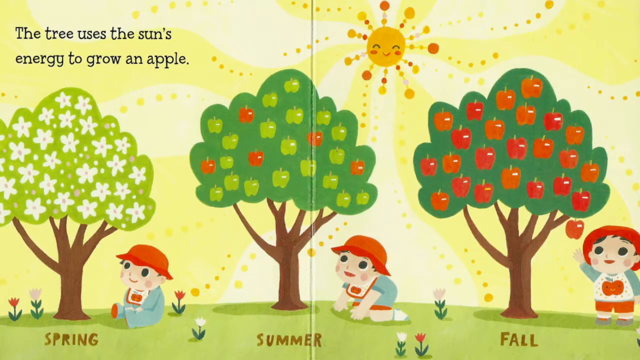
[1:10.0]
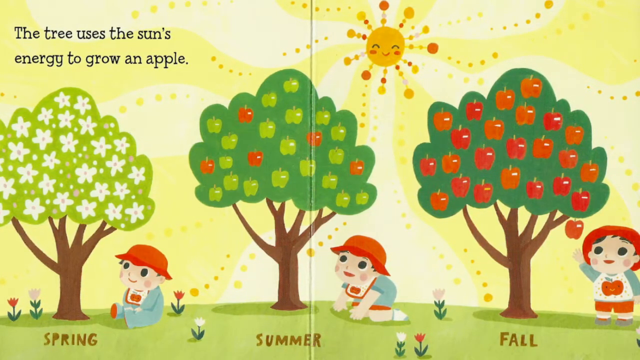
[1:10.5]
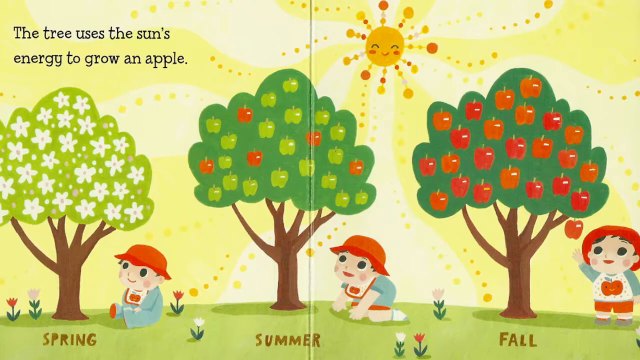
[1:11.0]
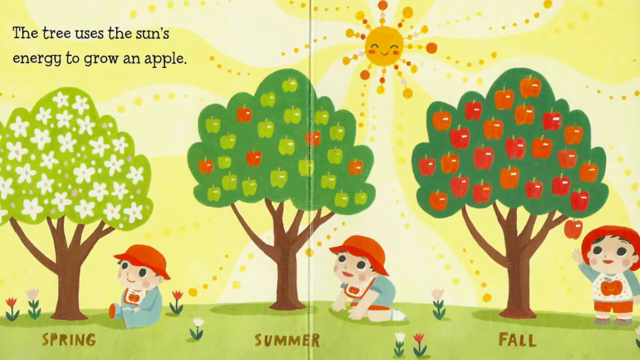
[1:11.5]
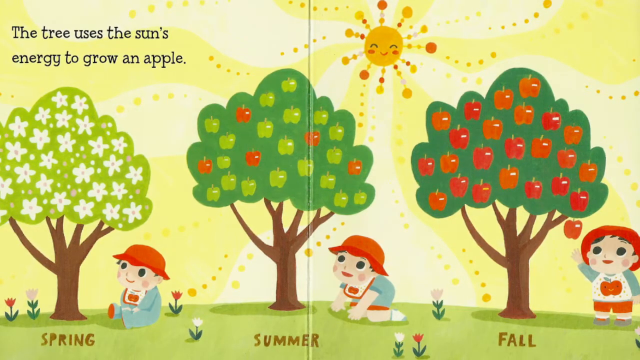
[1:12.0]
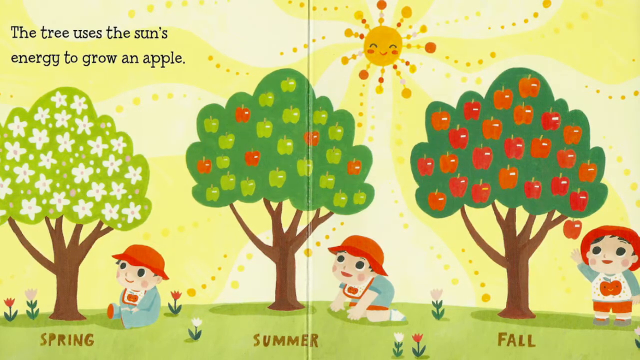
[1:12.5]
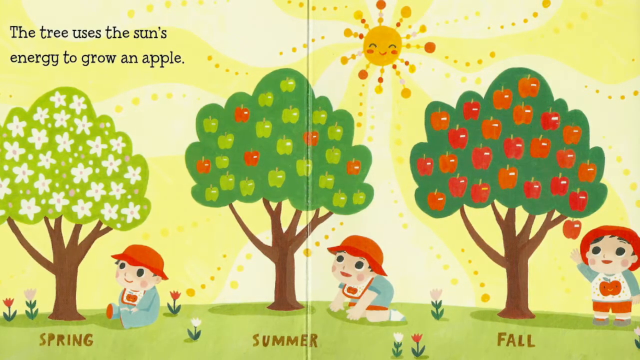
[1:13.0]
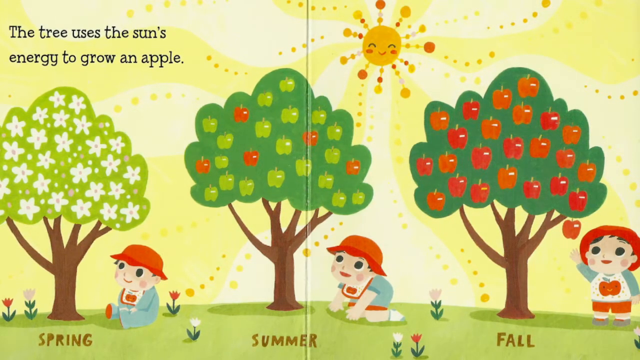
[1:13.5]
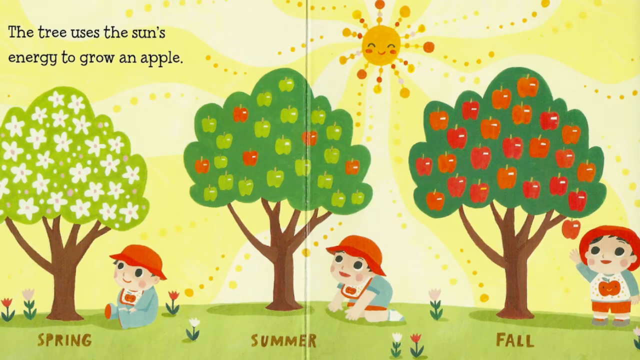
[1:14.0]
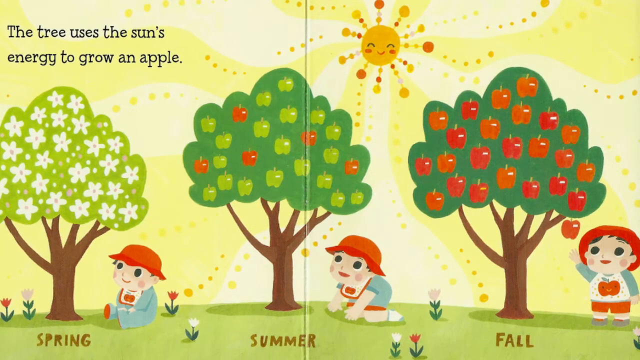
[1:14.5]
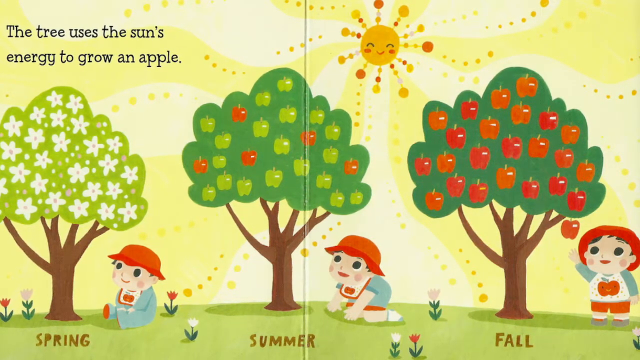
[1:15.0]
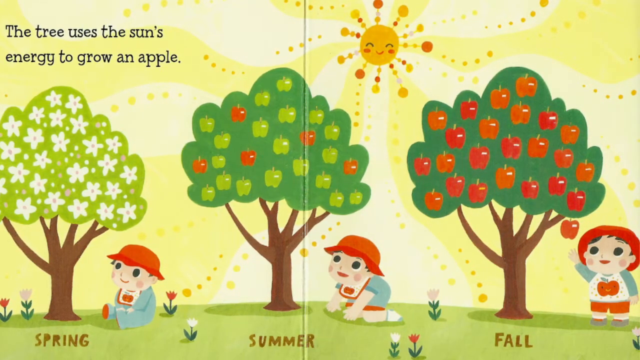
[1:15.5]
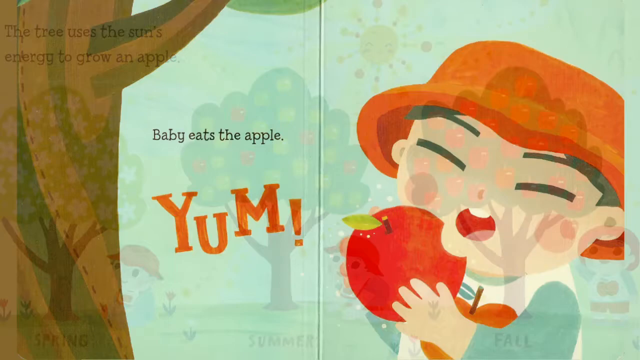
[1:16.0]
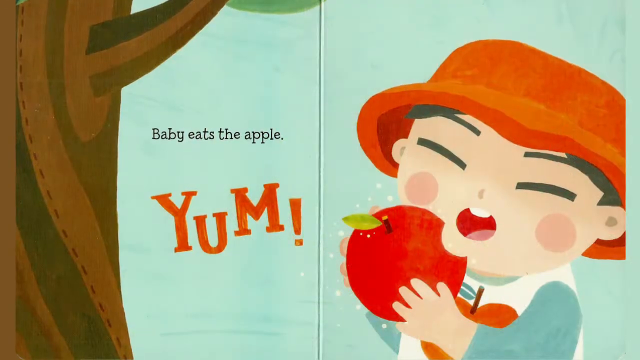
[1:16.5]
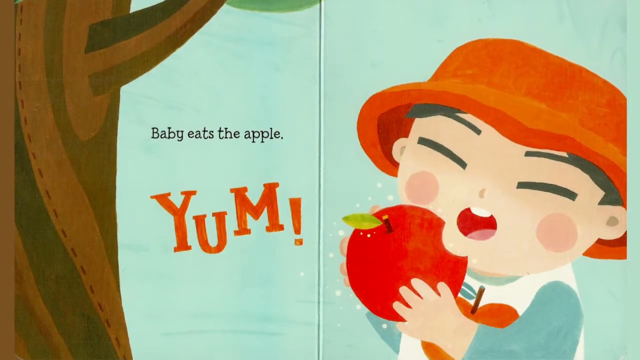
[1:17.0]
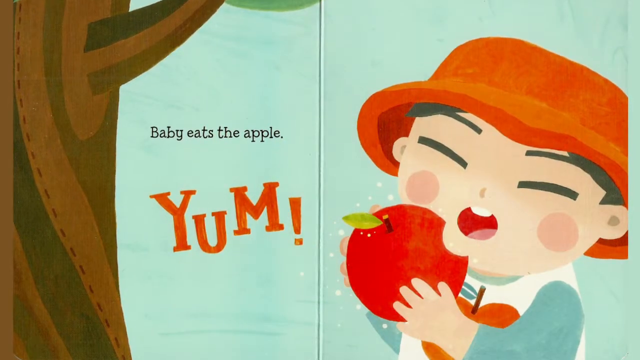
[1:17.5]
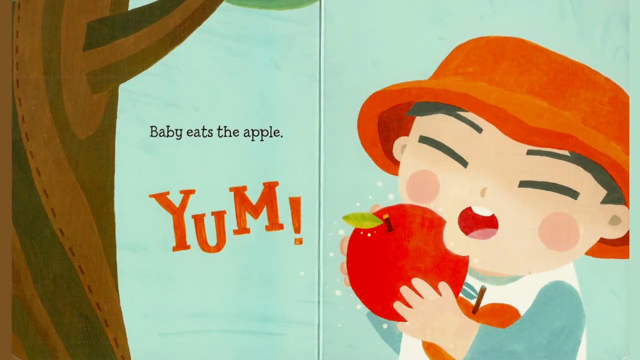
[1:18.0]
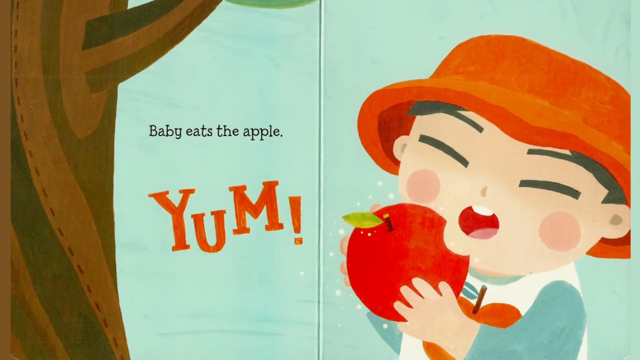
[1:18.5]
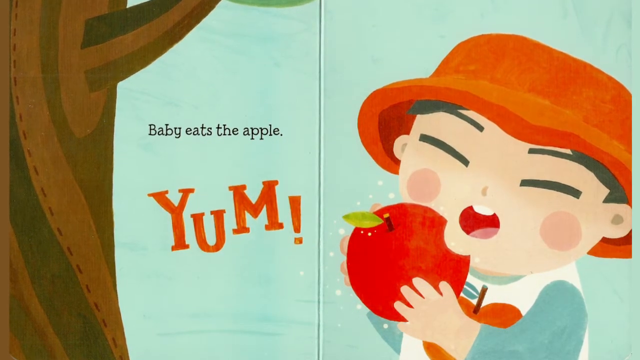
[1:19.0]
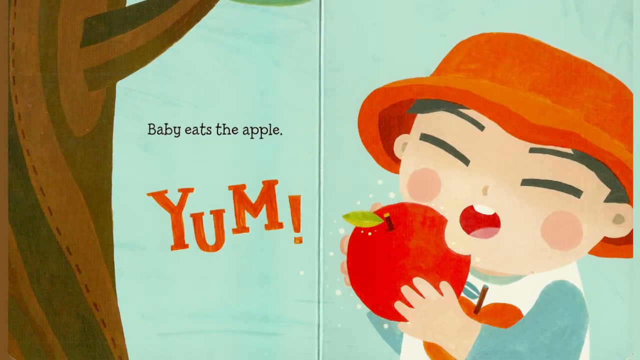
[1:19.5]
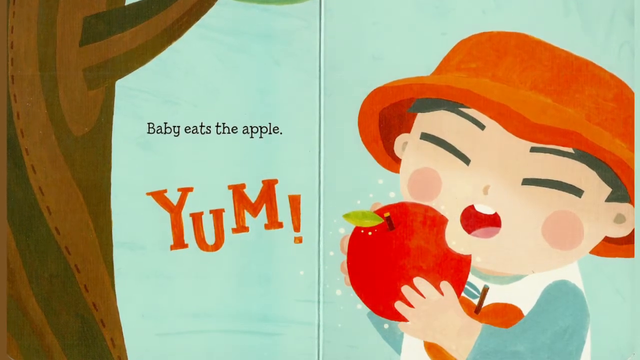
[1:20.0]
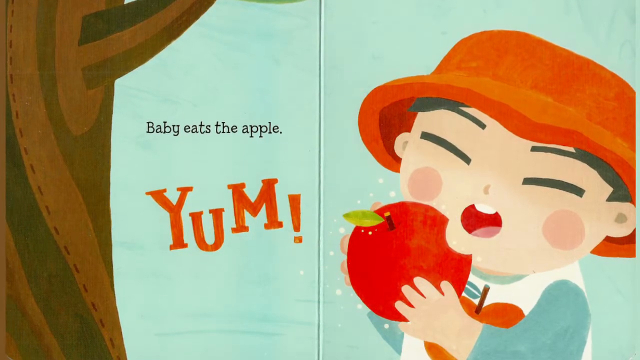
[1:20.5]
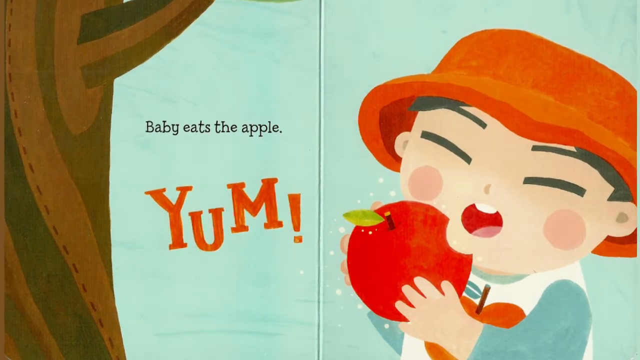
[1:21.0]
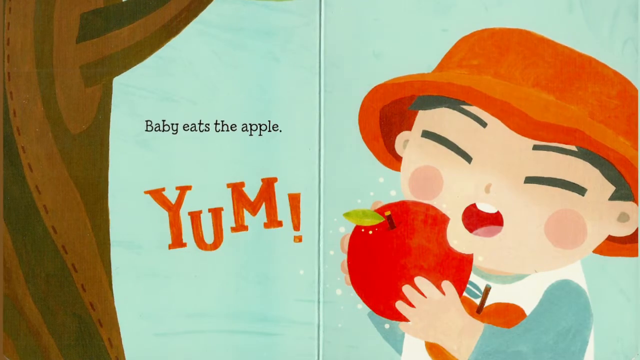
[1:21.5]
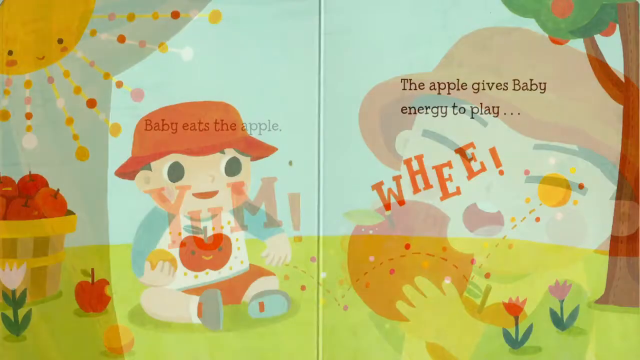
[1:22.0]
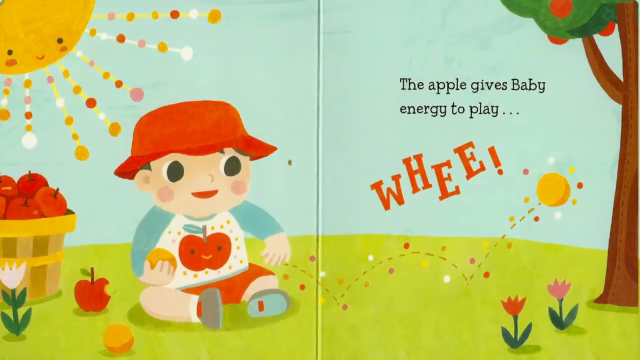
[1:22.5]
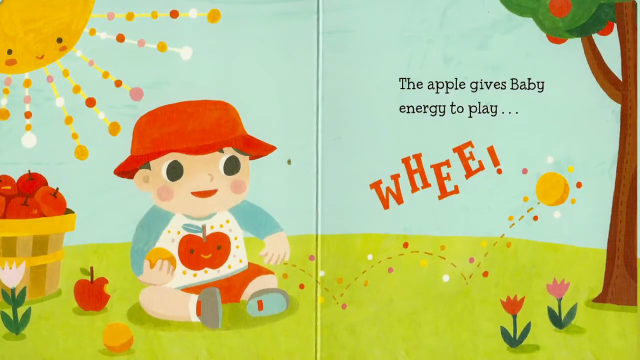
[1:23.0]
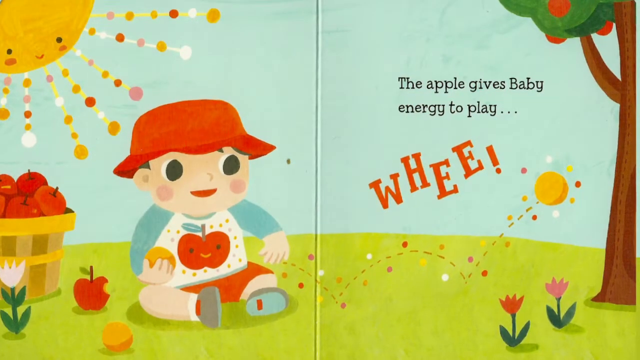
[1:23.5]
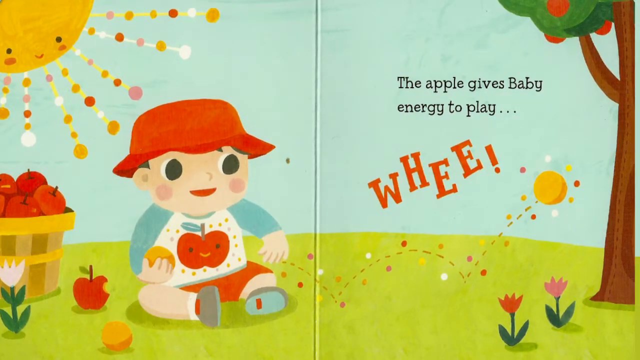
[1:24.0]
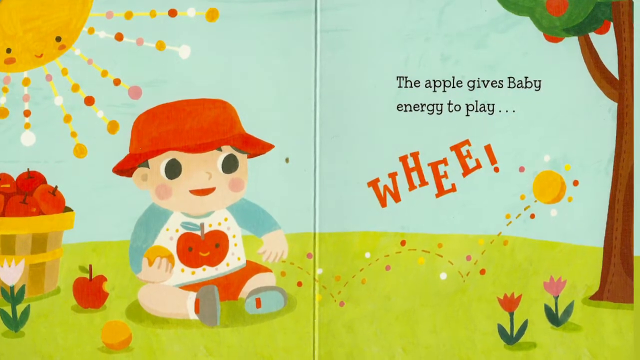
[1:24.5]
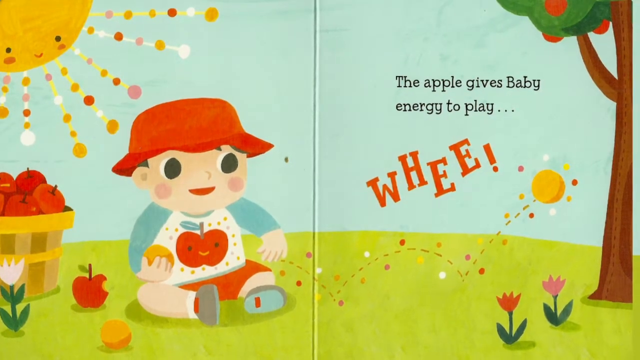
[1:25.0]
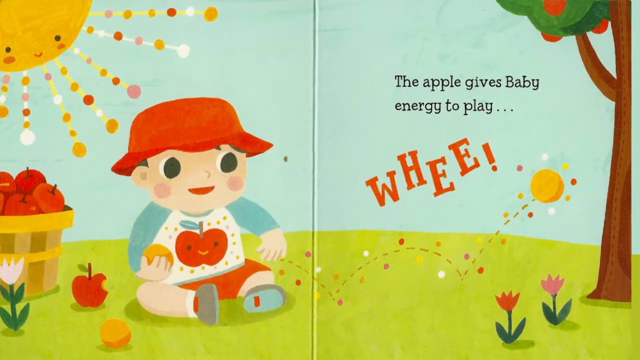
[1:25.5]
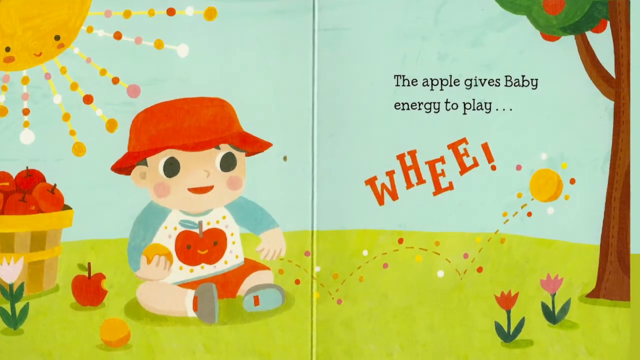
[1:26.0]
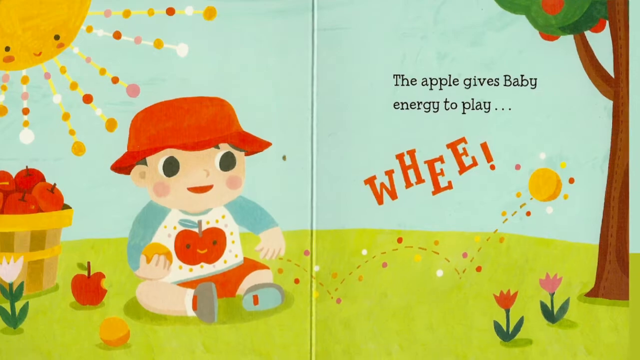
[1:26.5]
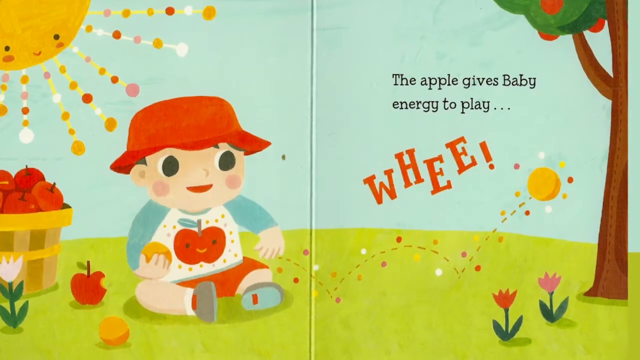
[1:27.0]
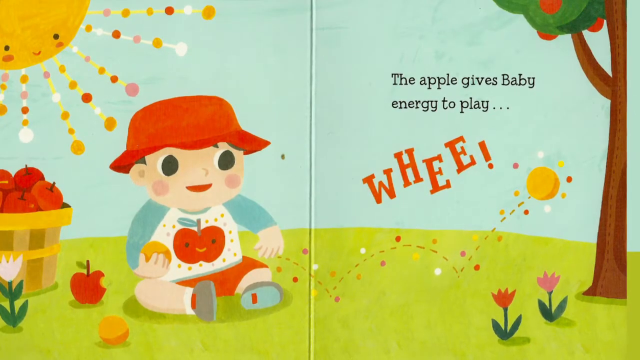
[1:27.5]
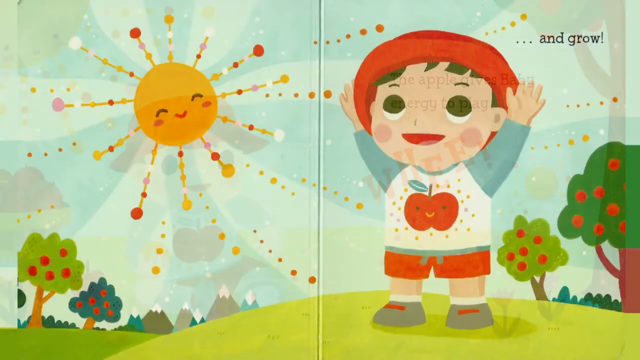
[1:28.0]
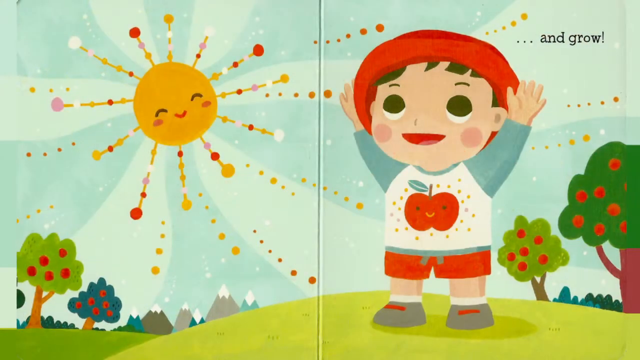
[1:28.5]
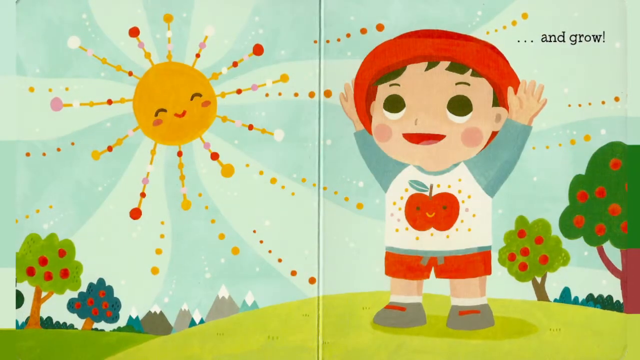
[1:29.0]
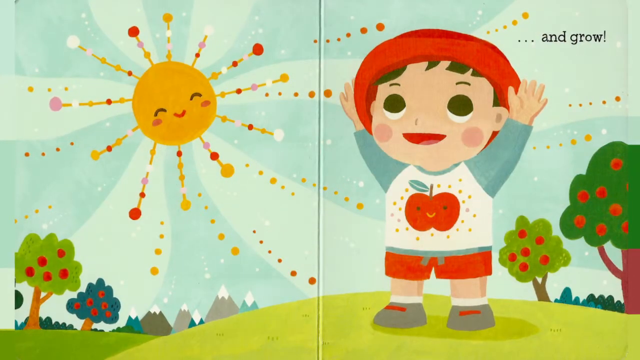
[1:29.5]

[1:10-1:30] The book, open to the page with the three trees, begins to fade out; the smaller tree shows the progression. The video then cuts to two open pages with a brown tree on the left and the text "baby eats apple," with "yum" underneath it in a more cartoonish font, larger, in different shades of red, with an exclamation point. The child has closed eyes, and the head is a little more orange than in the previous pictures. He holds an apple with both hands; there is a bite taken out of it, and a stem and a leaf come out of the apple. The child's mouth is open, showing white. The video cuts to a new page with the child on the left, sitting down with what is apparently an orange-ish apple and wearing the same clothes. The sun looks out with open eyes from the left corner border of the image. The child sits next to a bucket of apples on his right, which is the left of the screen, with a white flower underneath it. It looks like he is throwing another apple. On the right page the text reads "the apple gives baby energy to play," and underneath it, in a font similar to the previous image, it says "whee" in red and orange. On the border is another tree, where just the bottom of the leaves and a couple of apples can be seen.